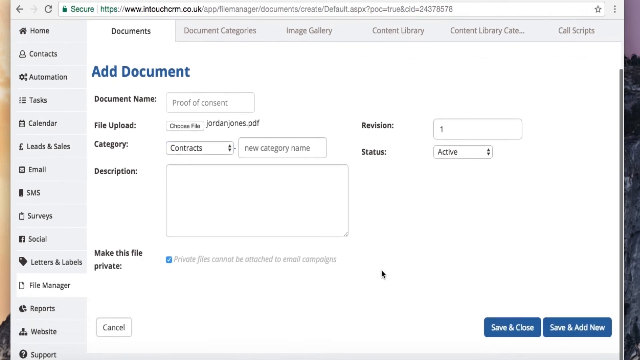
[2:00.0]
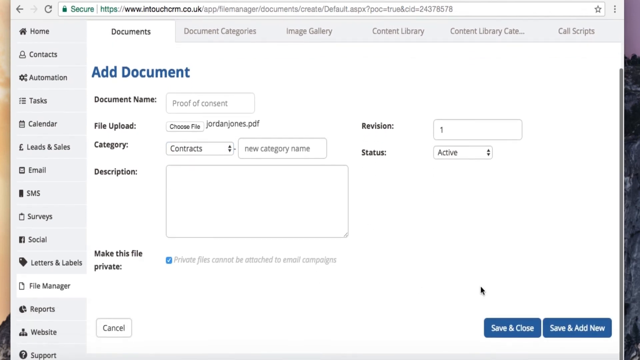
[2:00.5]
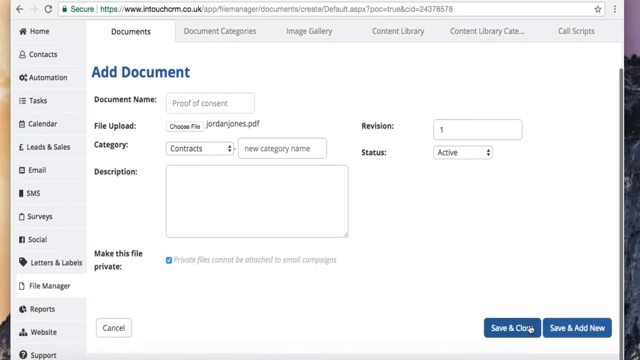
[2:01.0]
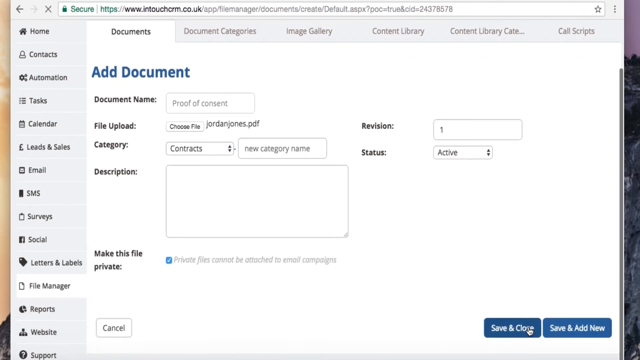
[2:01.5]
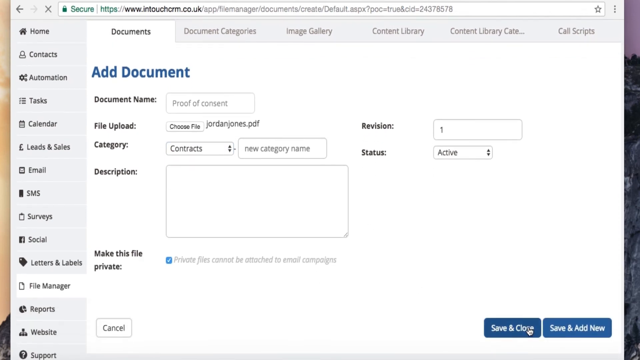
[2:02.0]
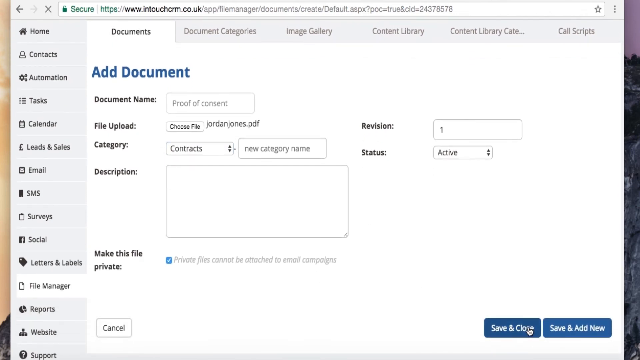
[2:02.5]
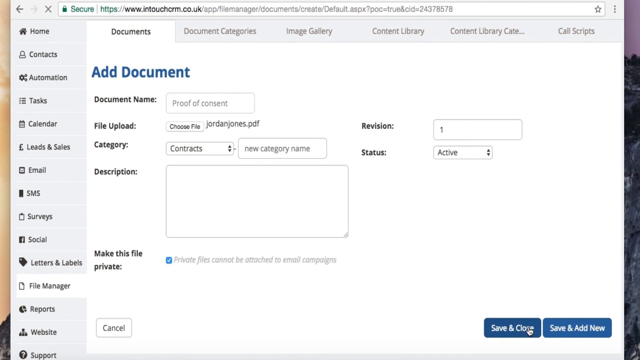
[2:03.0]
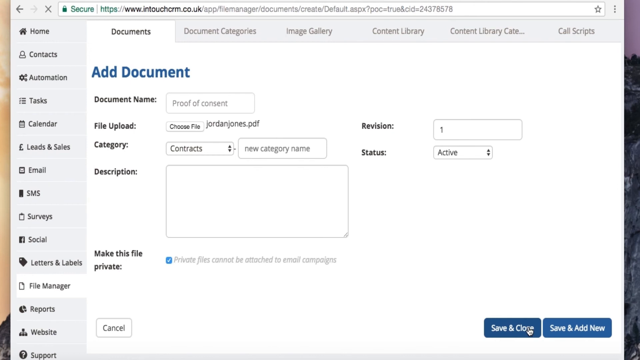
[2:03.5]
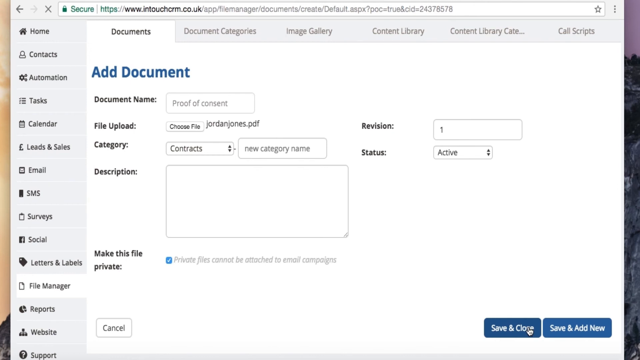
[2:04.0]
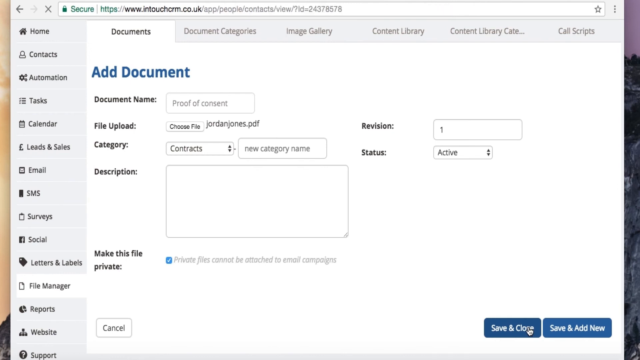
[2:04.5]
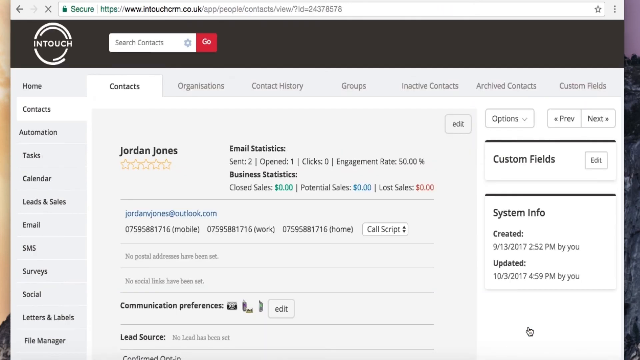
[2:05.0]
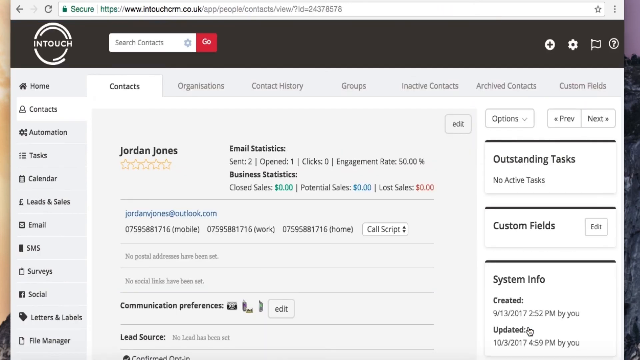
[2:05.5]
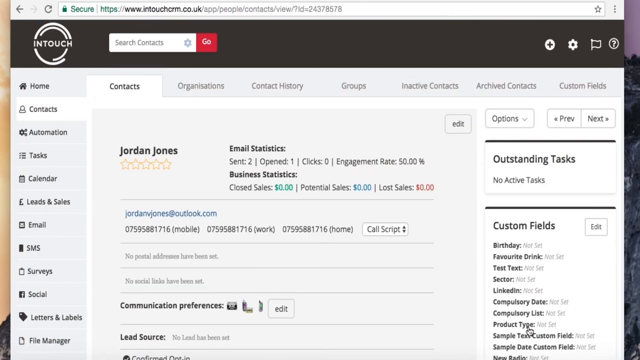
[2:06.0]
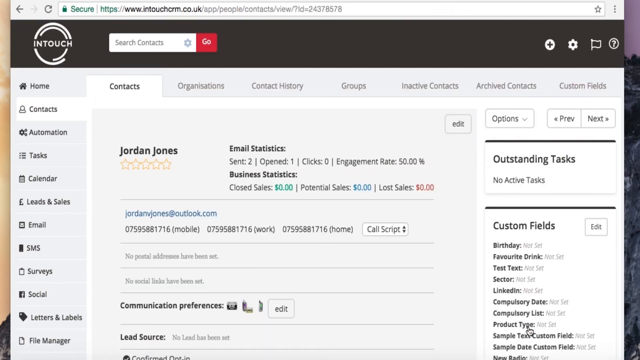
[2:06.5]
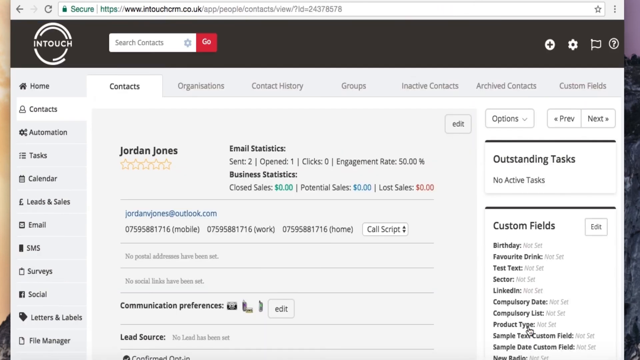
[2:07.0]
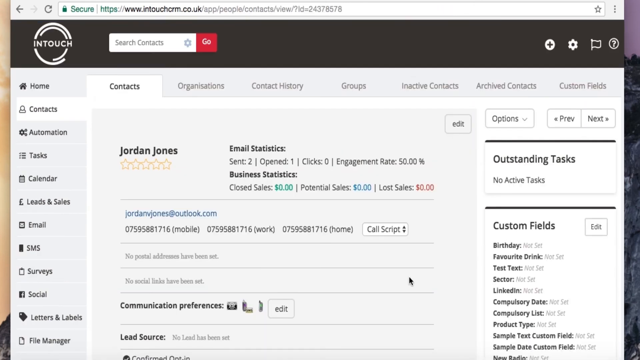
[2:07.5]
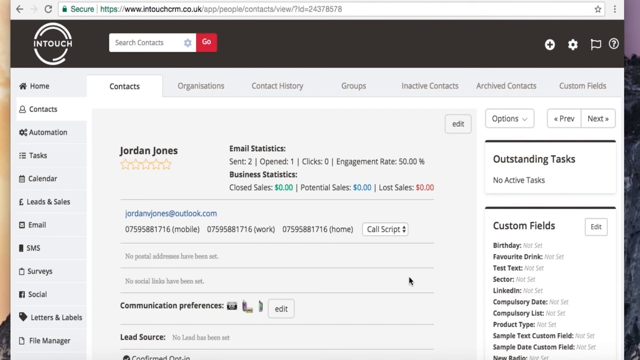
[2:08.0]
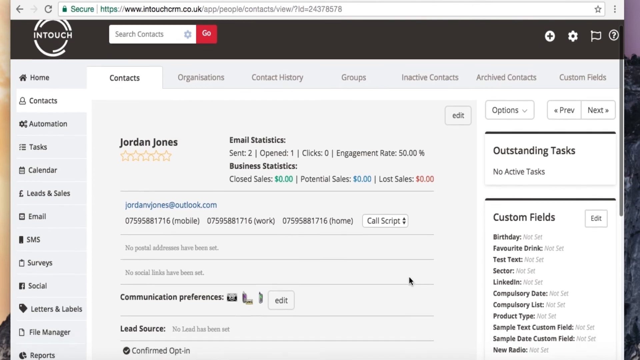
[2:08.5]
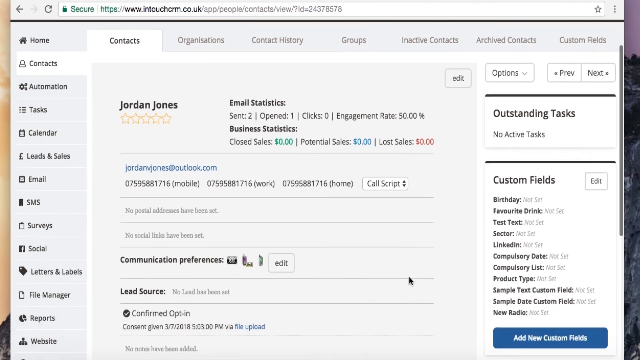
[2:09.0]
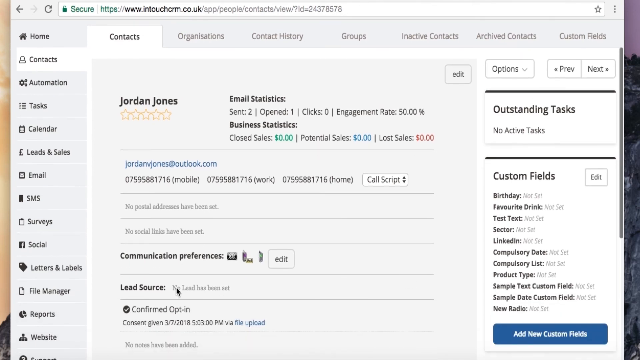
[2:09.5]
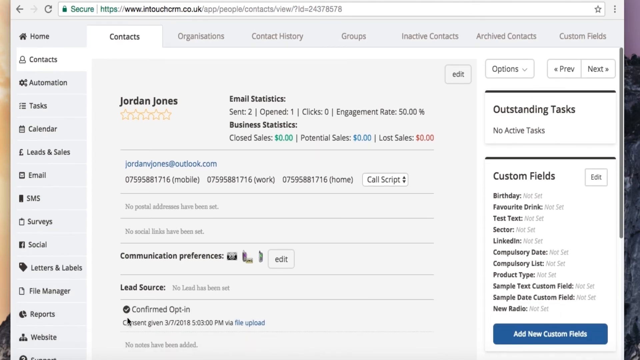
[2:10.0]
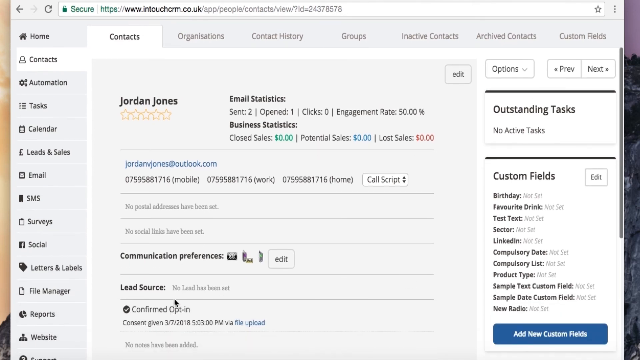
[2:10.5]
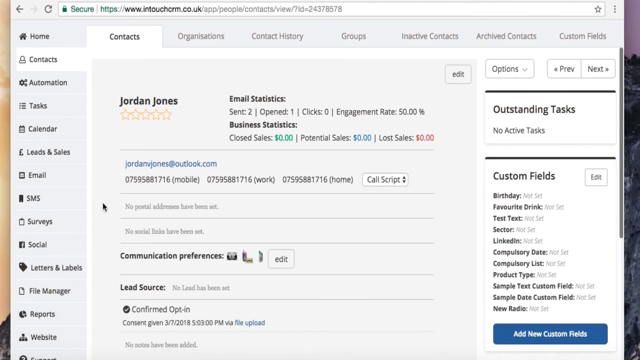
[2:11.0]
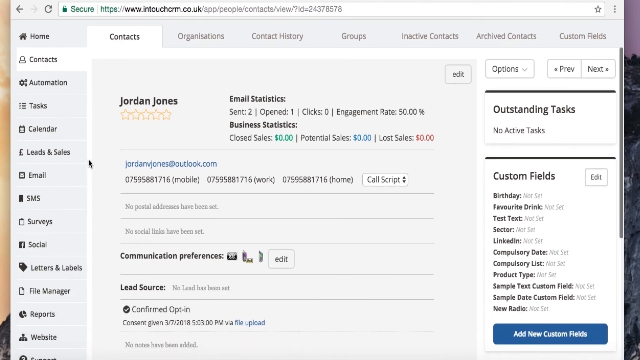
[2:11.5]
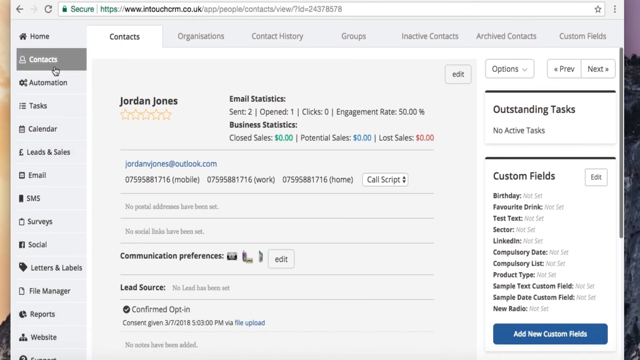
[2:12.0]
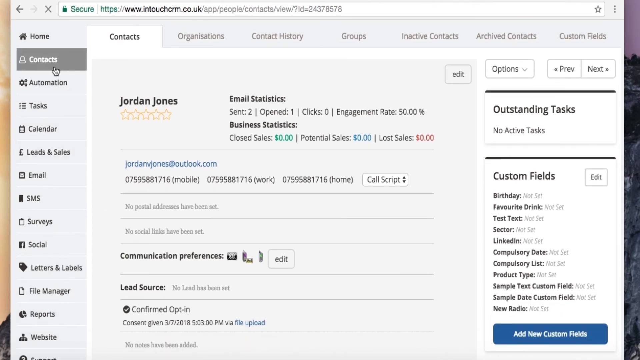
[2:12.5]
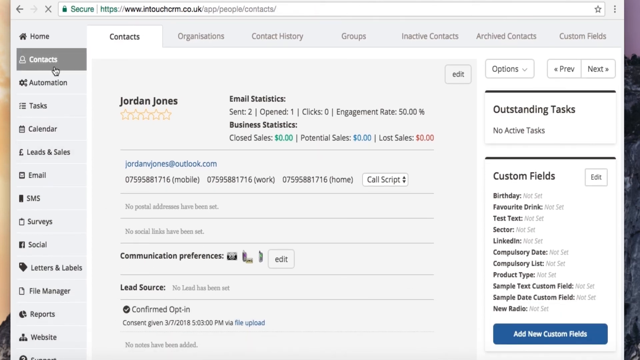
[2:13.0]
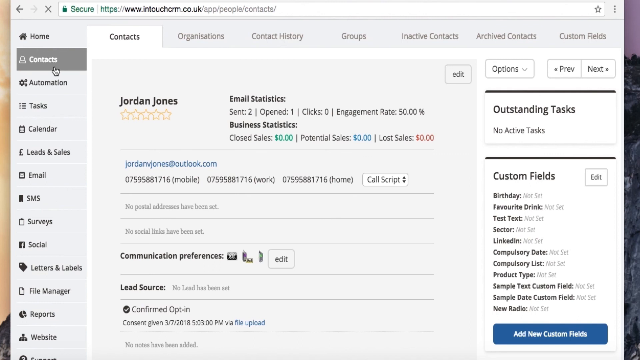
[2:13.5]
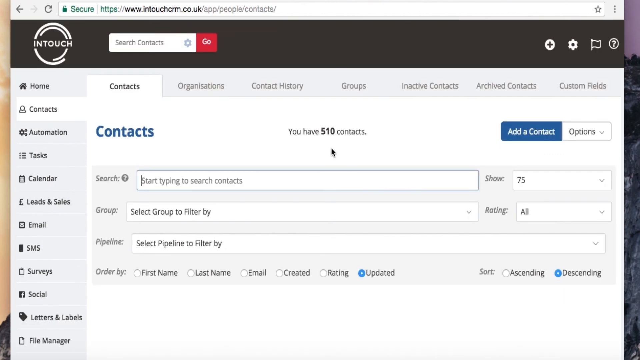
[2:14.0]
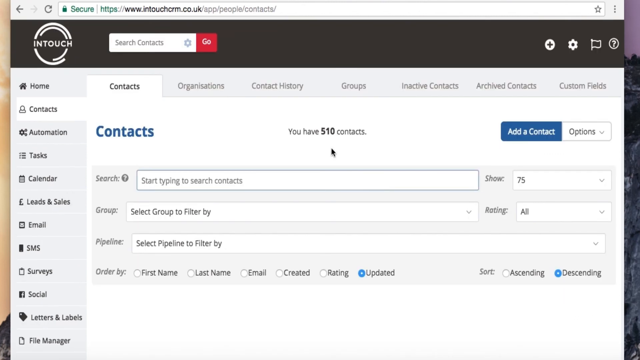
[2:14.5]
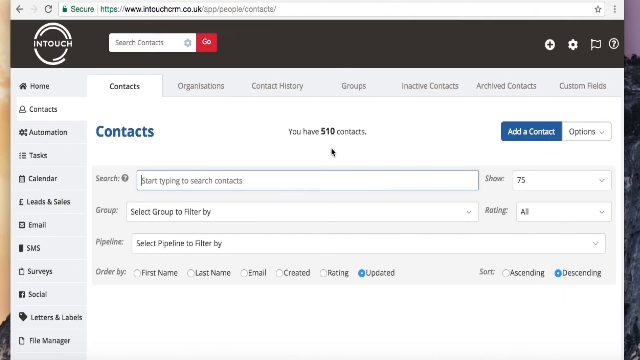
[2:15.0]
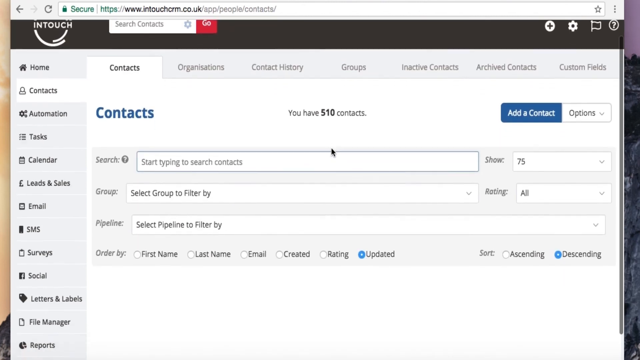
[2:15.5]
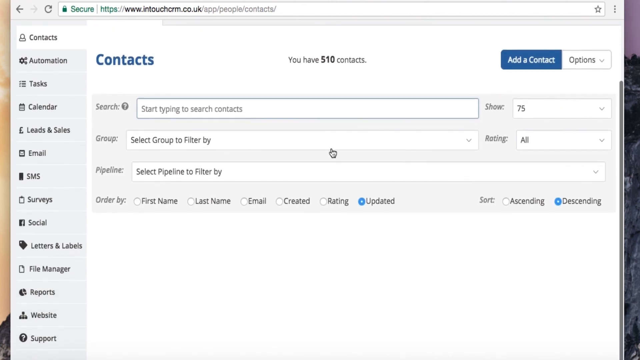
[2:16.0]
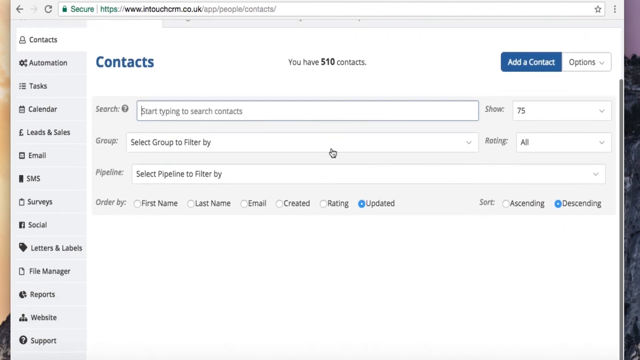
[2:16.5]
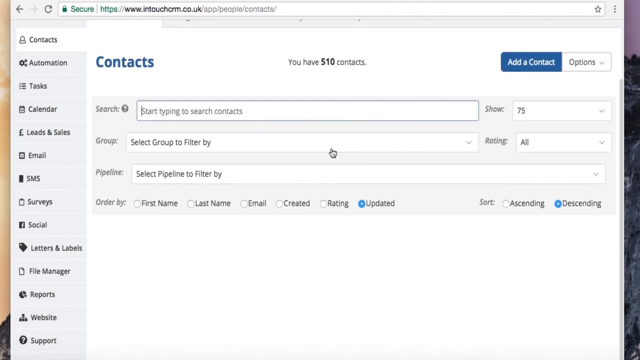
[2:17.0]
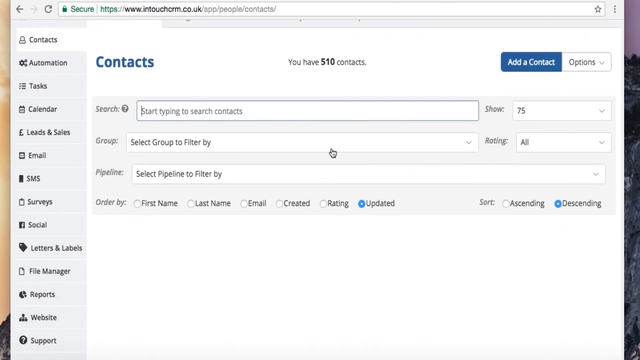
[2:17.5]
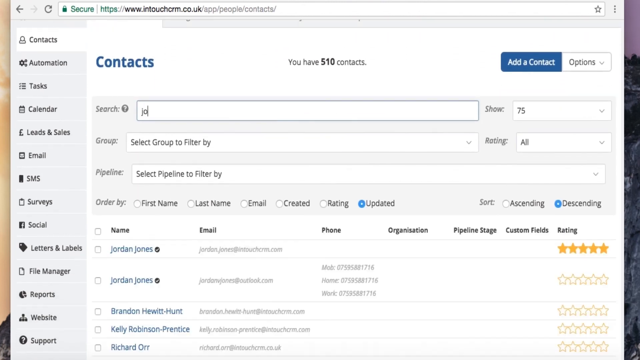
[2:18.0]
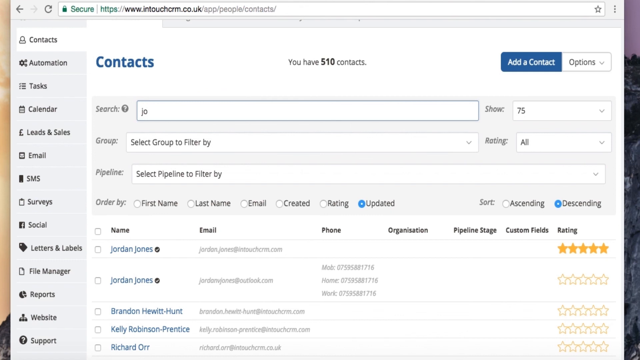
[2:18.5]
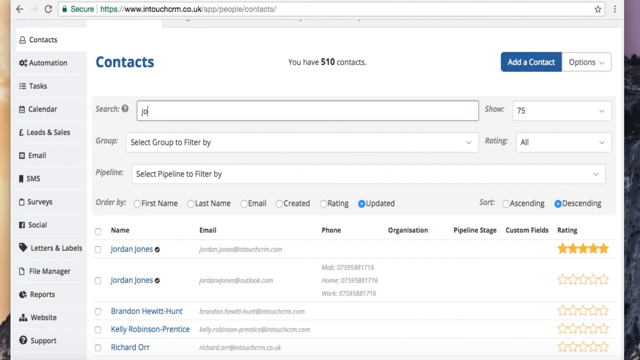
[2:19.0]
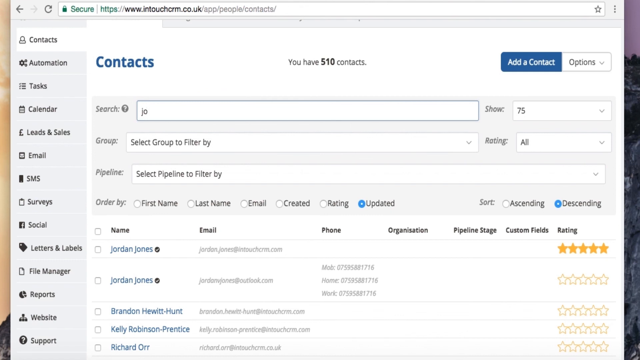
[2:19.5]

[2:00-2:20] Further down in the bottom right corner are a blue save and close button and a blue save and add new button. Save and close is clicked, returning to his contact page. On the right side is a tasks section that says "no active tasks," then custom fields, which can be edited, and system info below that. The page is scrolled down a little, and at the bottom it says "confirmed opt-in" with a checkmark by it. Contacts at the top is clicked again, opening a contacts page for searching for people by group, pipeline and show rating, with a couple of radio buttons at the bottom for different options. The page is scrolled down a little and "JO" is typed in, bringing up emails at the bottom for people with JO in their name.